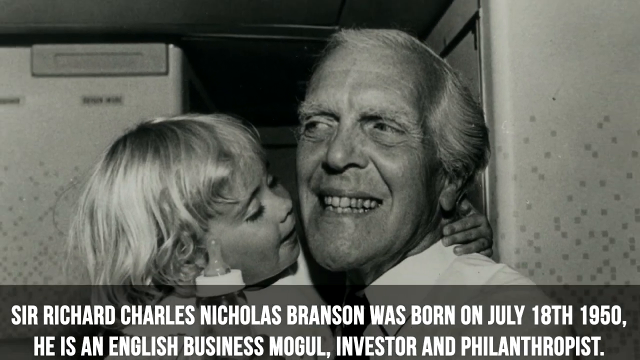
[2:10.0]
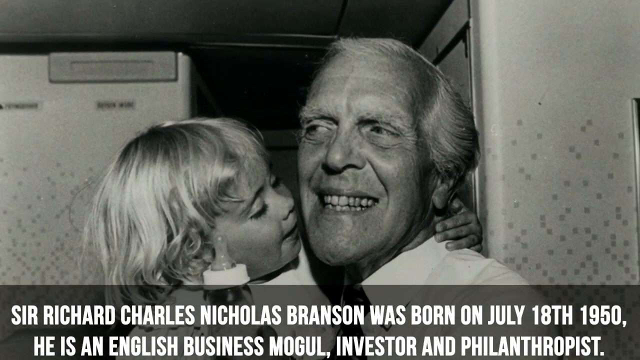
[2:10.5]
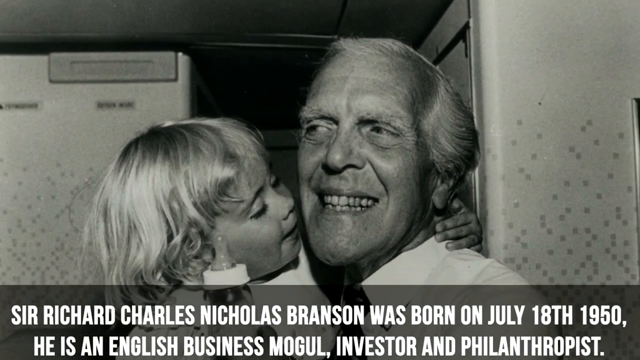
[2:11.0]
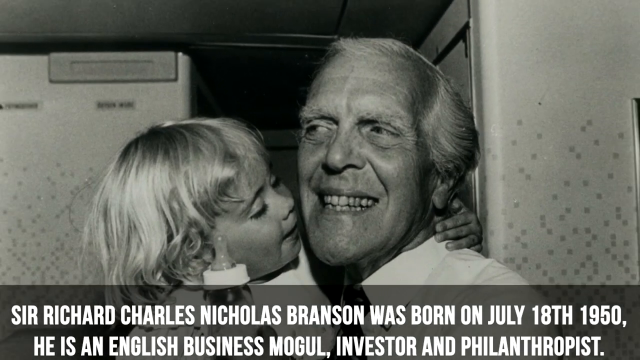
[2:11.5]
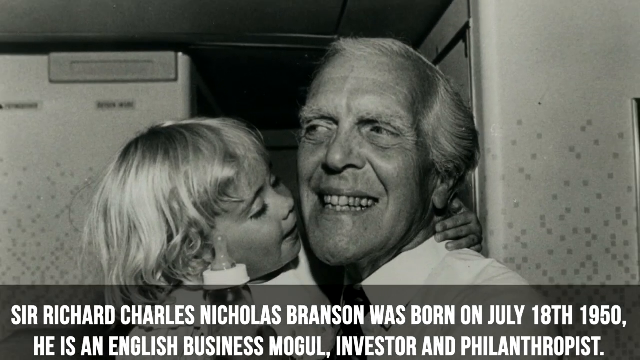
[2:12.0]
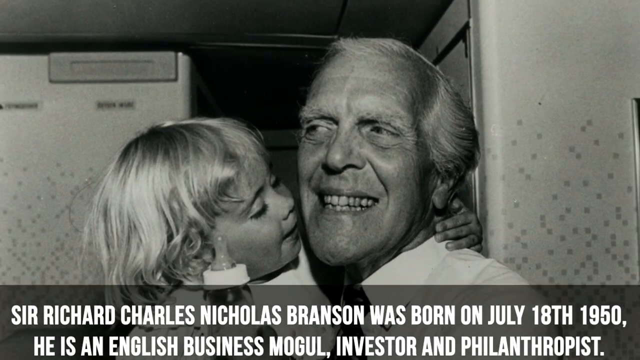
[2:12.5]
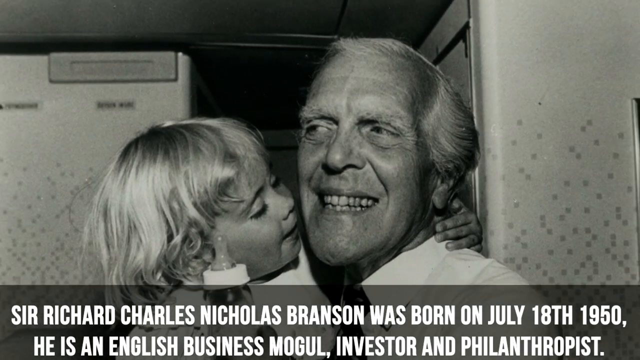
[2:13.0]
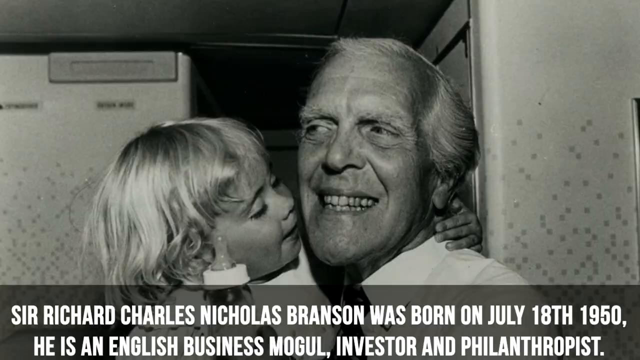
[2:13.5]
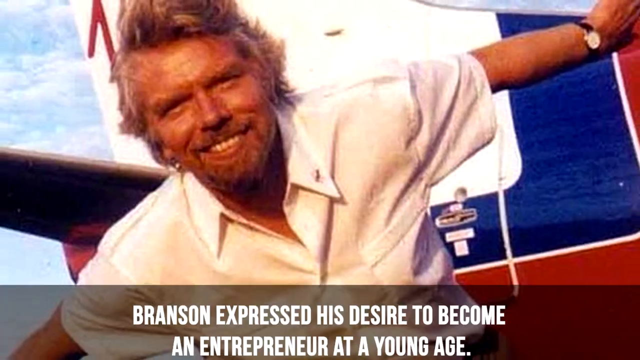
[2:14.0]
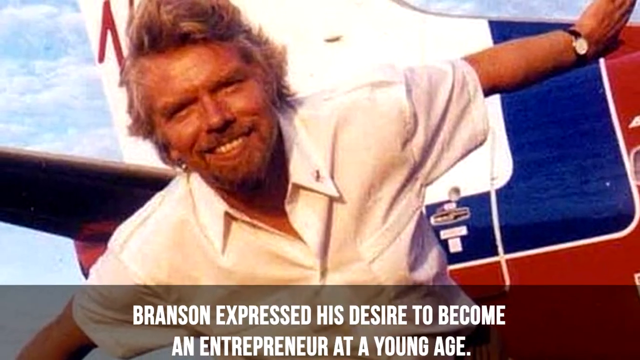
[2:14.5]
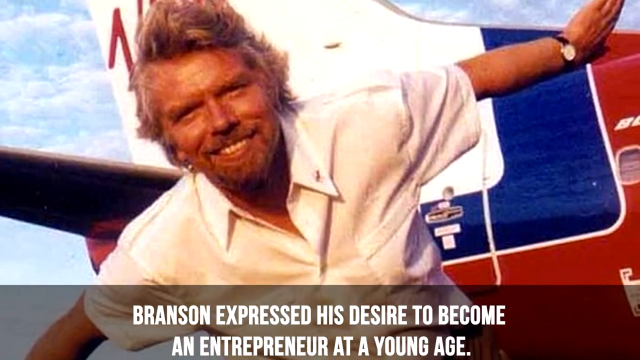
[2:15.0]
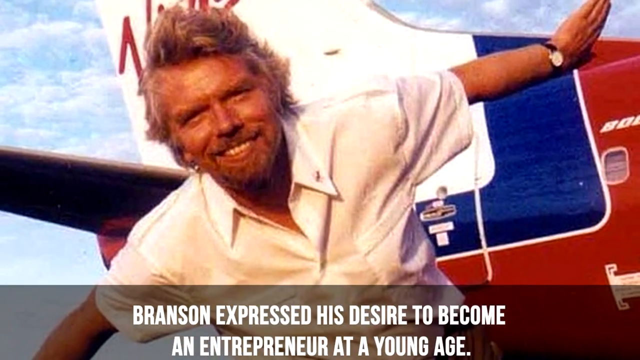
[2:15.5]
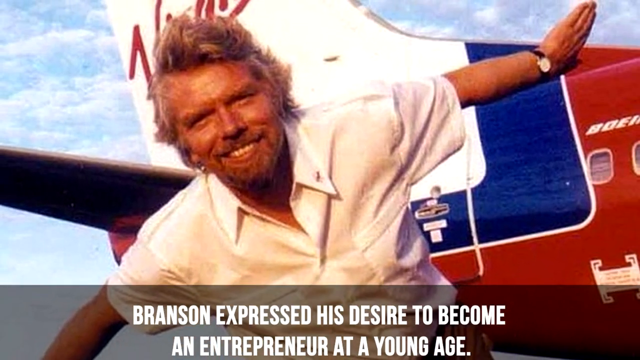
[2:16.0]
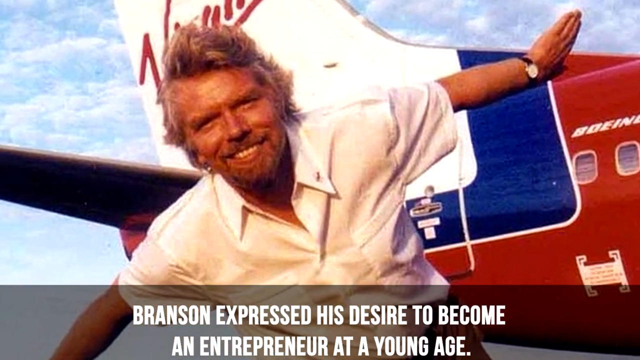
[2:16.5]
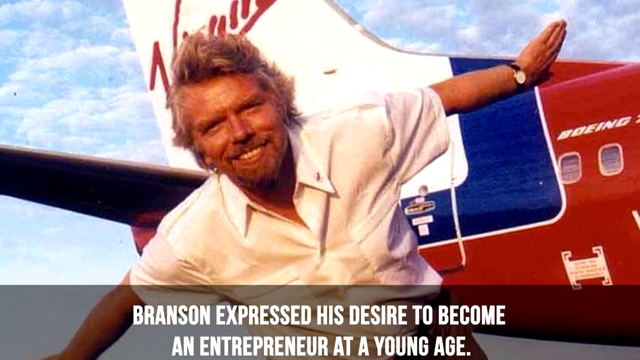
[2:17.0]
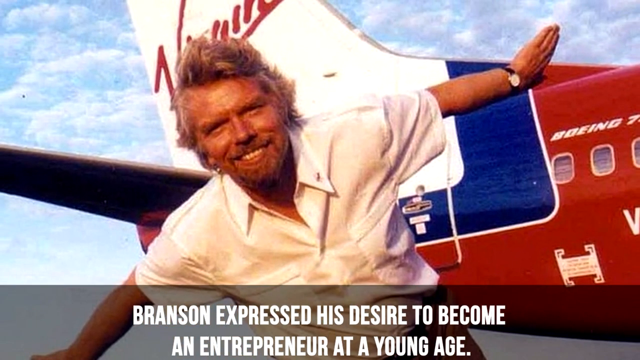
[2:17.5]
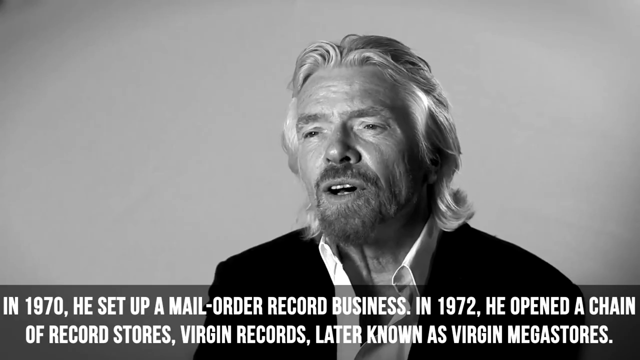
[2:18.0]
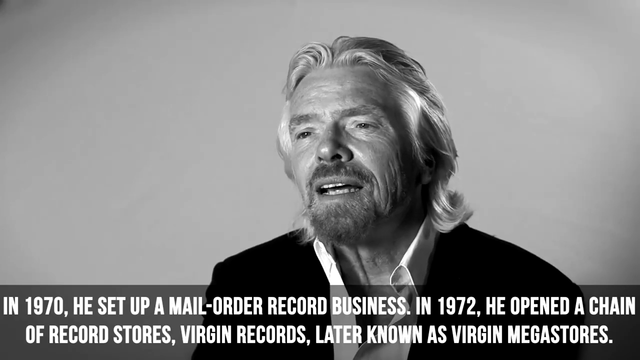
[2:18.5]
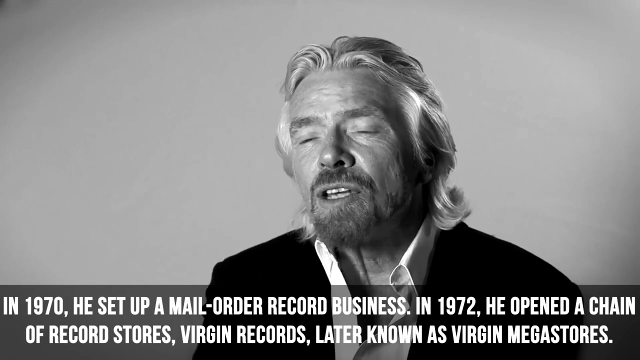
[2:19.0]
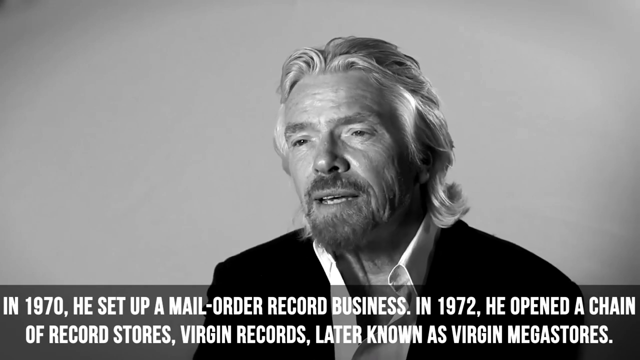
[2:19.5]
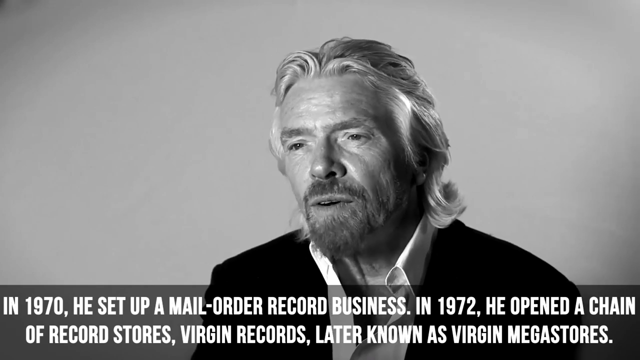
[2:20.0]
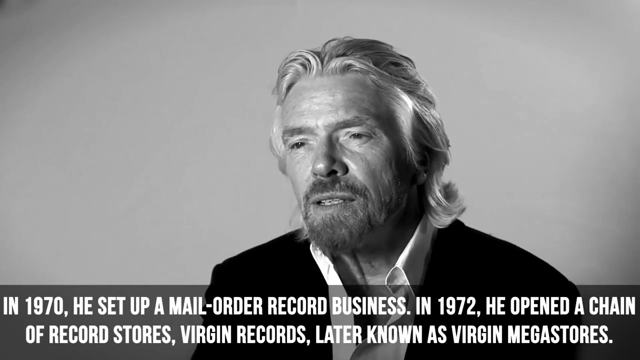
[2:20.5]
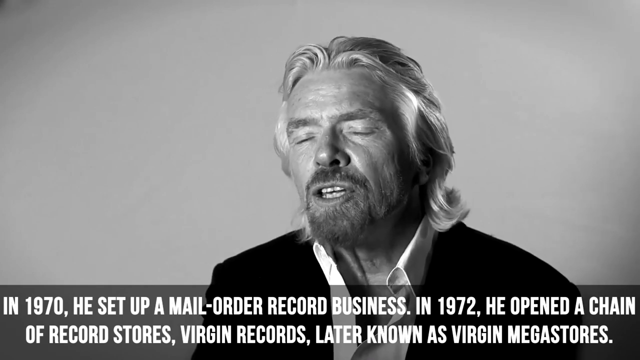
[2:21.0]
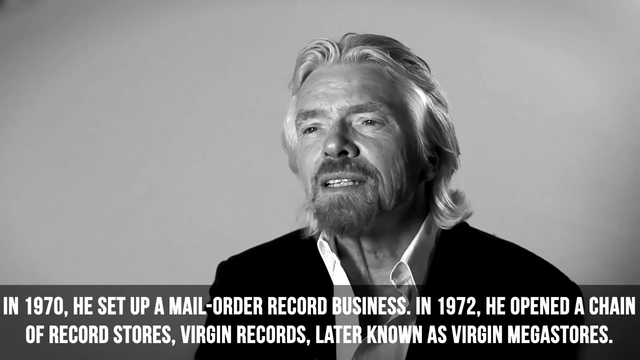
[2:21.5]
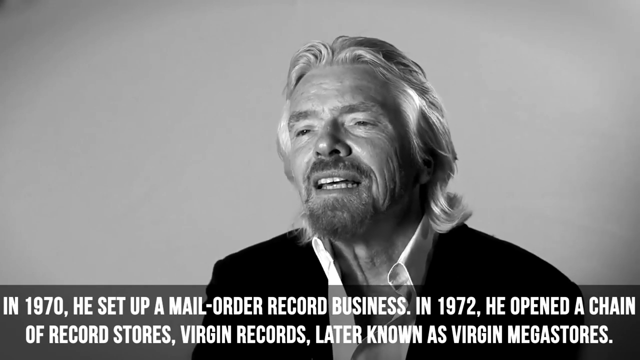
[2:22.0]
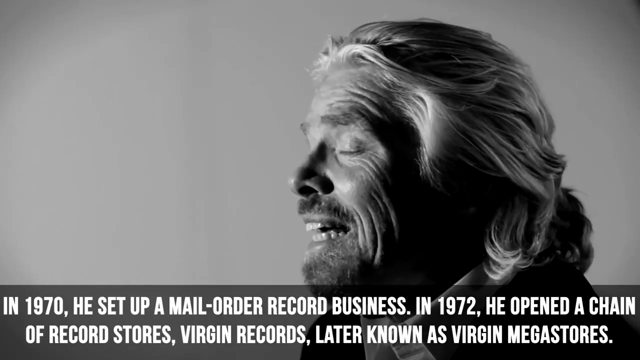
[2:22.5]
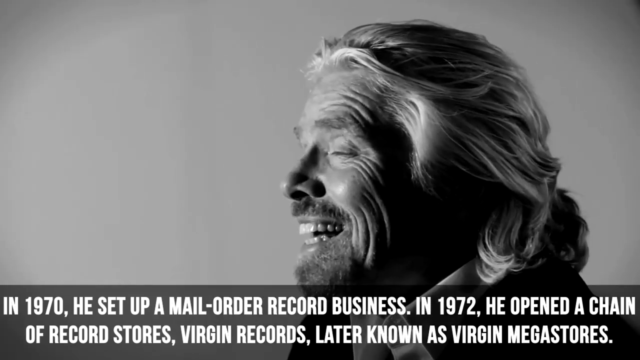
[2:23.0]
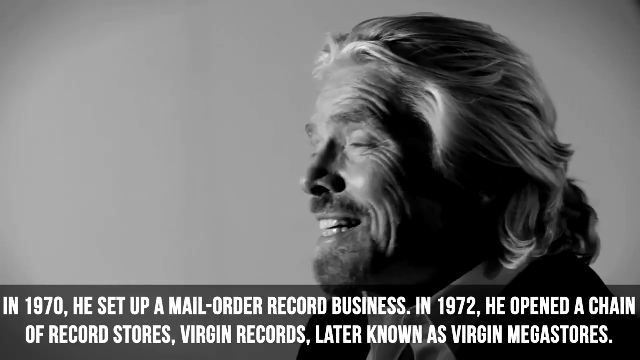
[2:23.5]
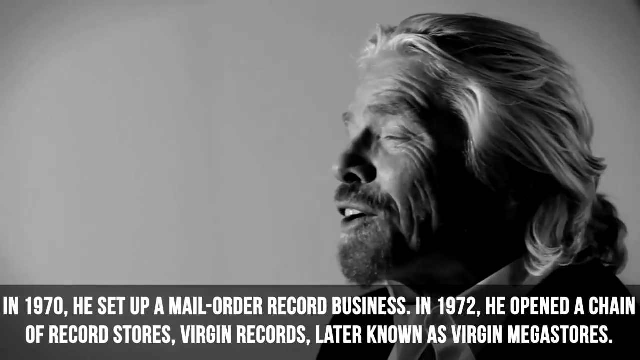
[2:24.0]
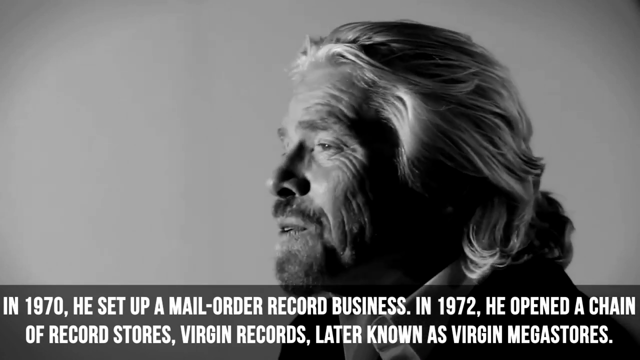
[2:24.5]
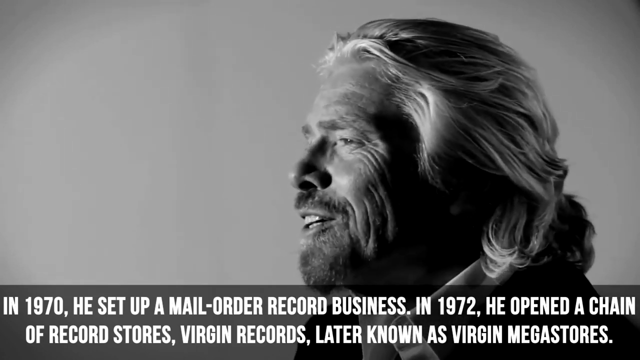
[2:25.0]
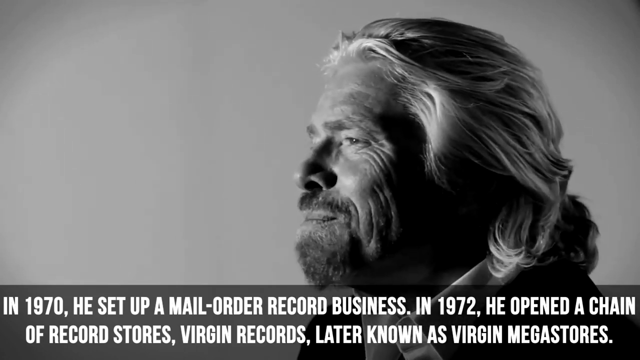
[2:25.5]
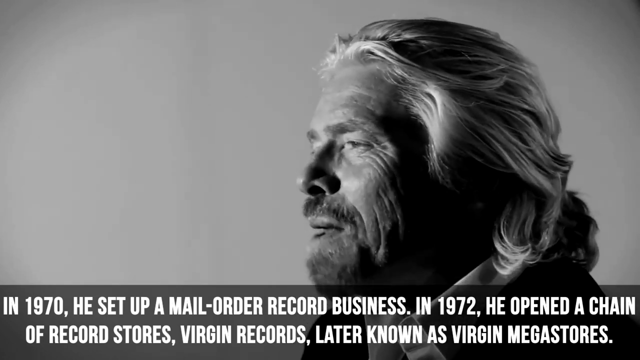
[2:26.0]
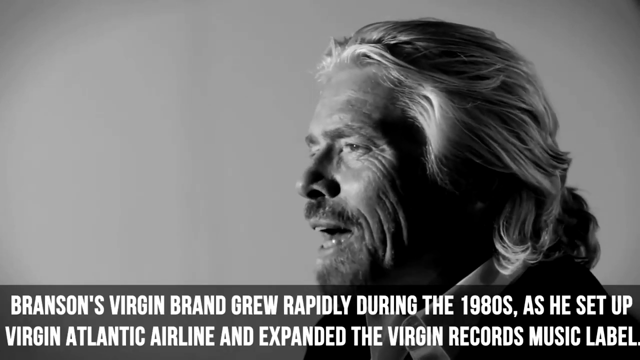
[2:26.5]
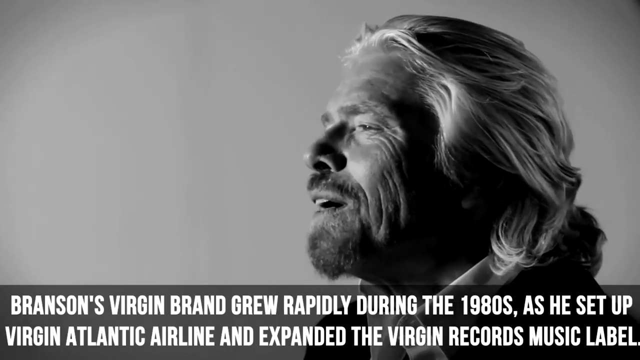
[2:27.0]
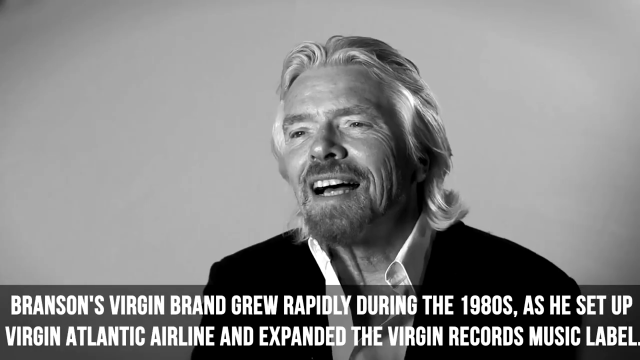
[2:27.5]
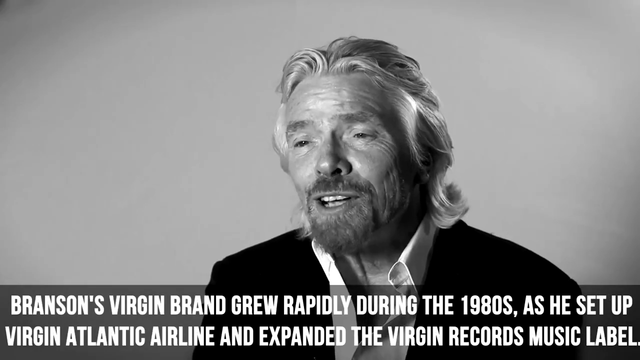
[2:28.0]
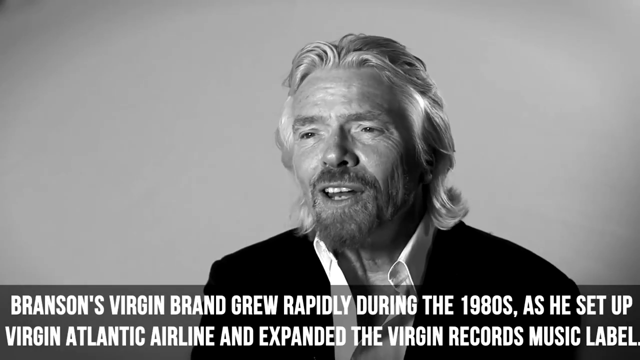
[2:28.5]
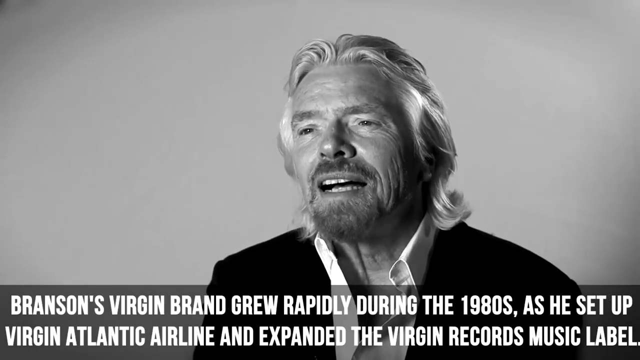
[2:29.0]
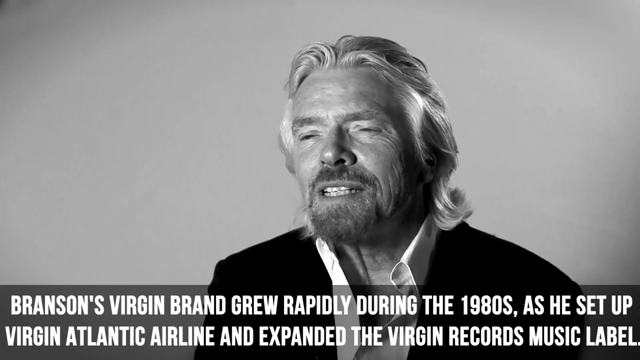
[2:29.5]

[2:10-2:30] A mostly black-and-white photo shows a much older man on the right and a little kid on the left looking very intently to the right at the older man holding a baby bottle. The text reads "Sir Richard Charles Nicholas Branson was born on July 18, 1950. He's an English business mogul, investor, and entrepreneur." The video cuts to an interview of Branson talking to the camera, while the text says that in 1970 he set up a mail order record business and in 1972 opened a chain of record stores, Virgin Records, later known as Virgin Megastores, and goes on about the Virgin label and an airline. This interview seems to be a very short shot.